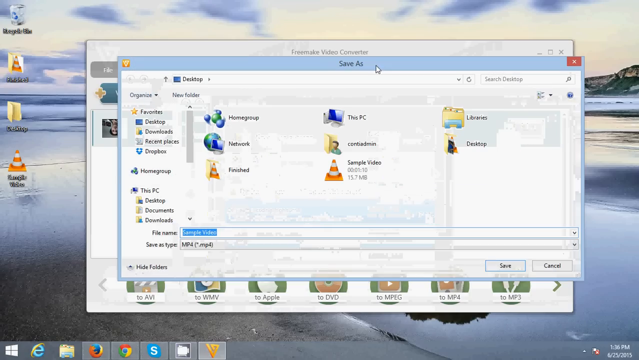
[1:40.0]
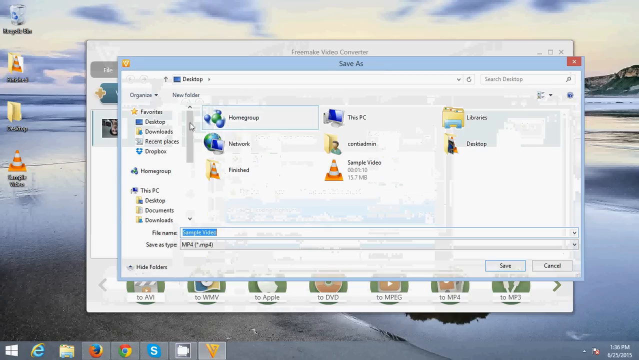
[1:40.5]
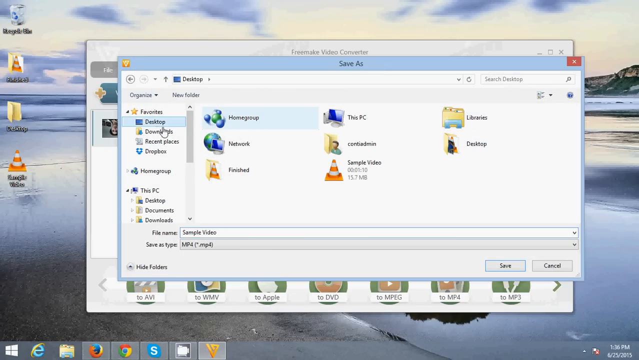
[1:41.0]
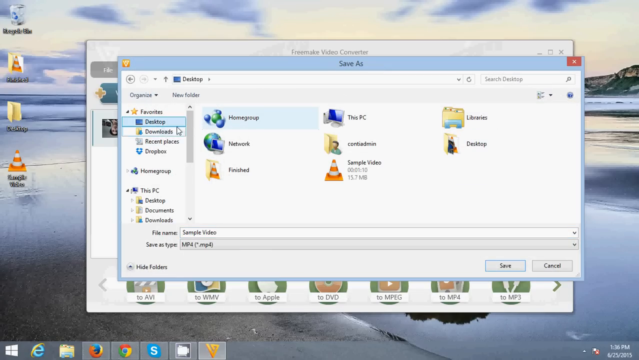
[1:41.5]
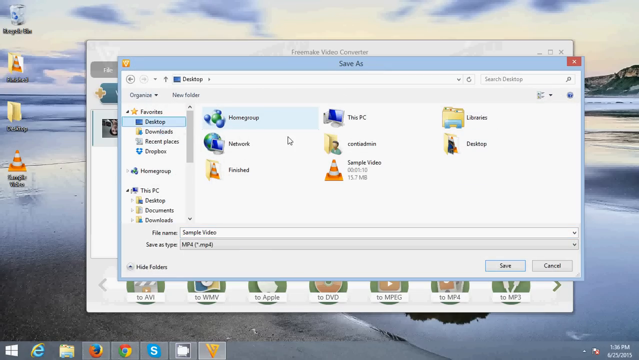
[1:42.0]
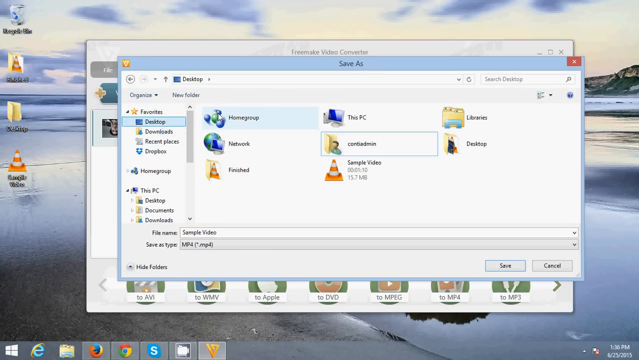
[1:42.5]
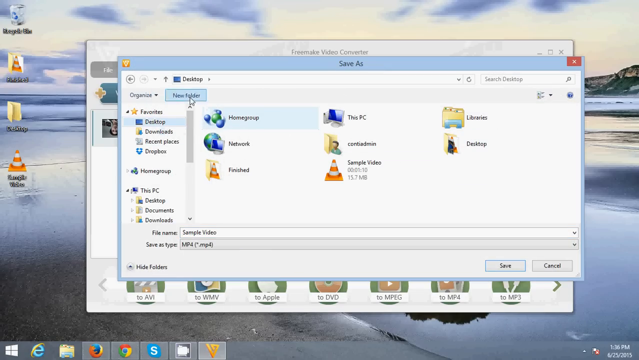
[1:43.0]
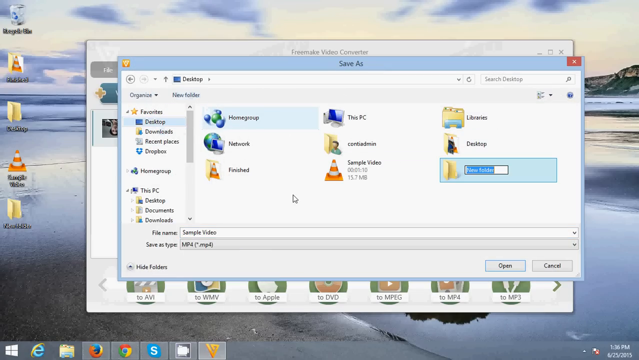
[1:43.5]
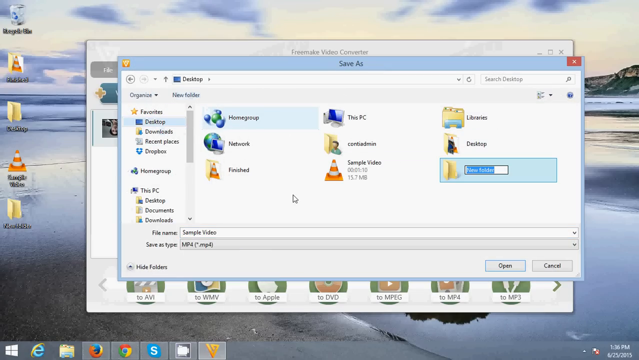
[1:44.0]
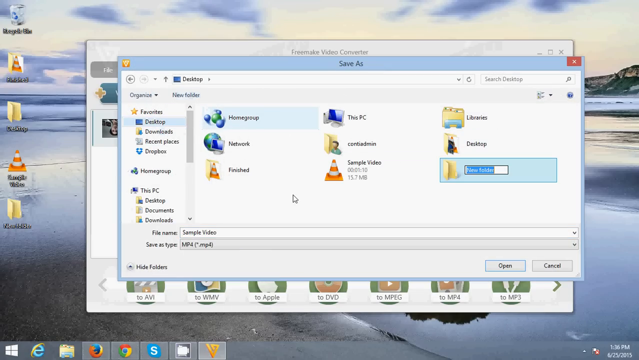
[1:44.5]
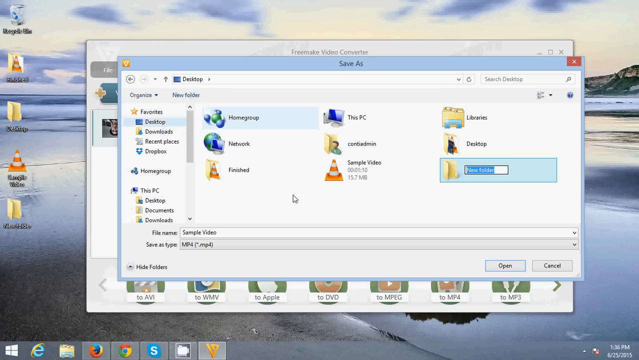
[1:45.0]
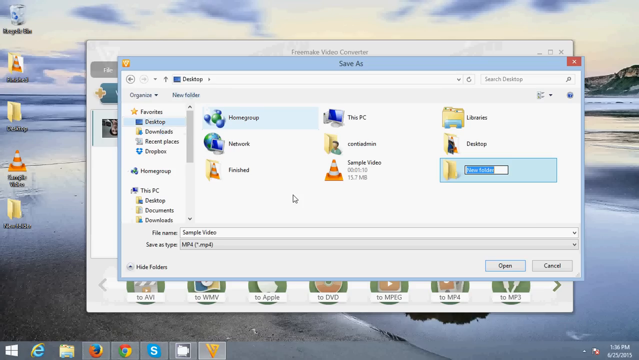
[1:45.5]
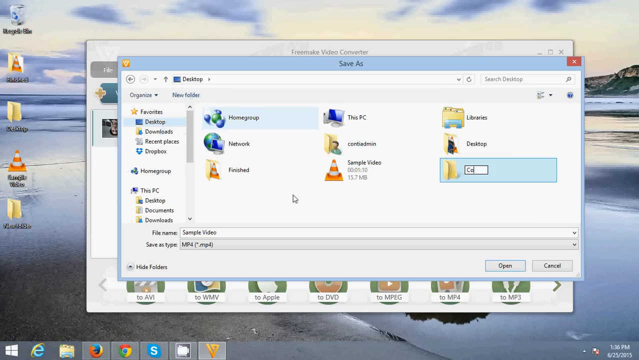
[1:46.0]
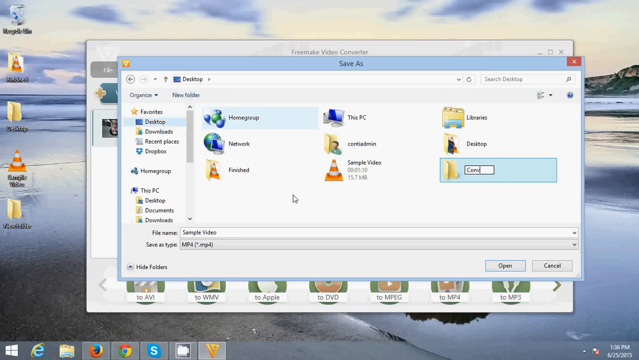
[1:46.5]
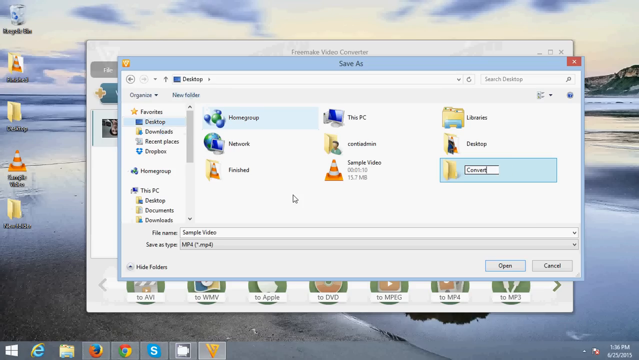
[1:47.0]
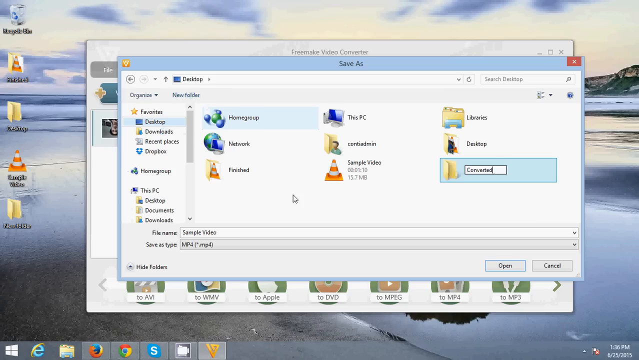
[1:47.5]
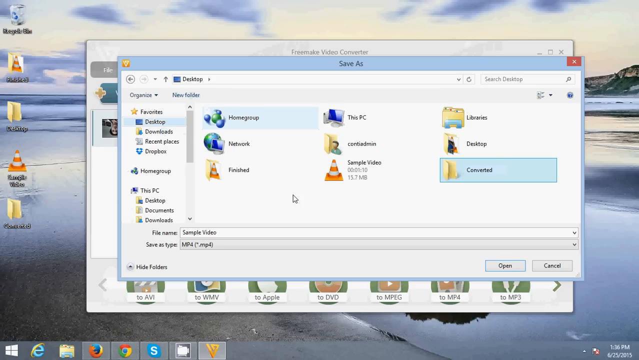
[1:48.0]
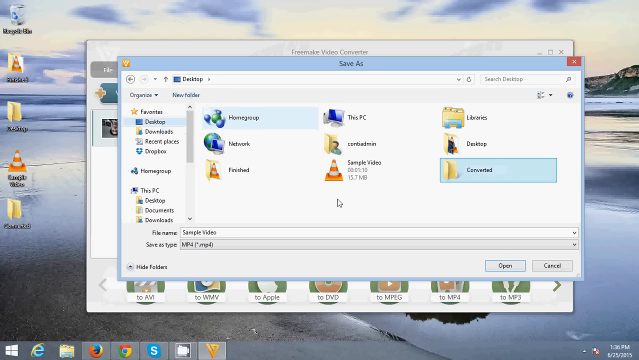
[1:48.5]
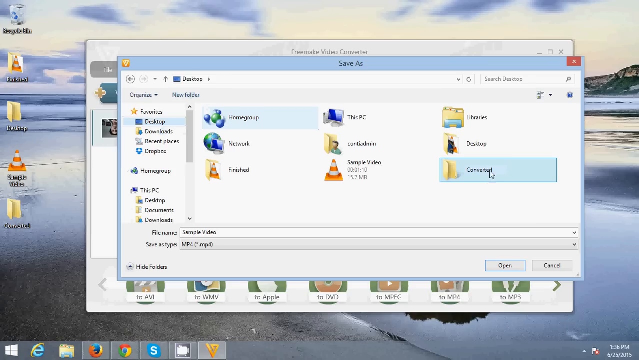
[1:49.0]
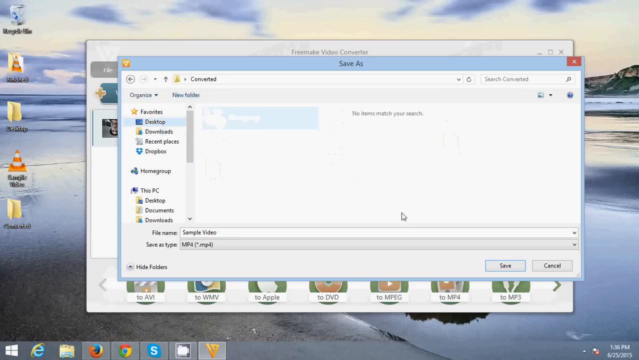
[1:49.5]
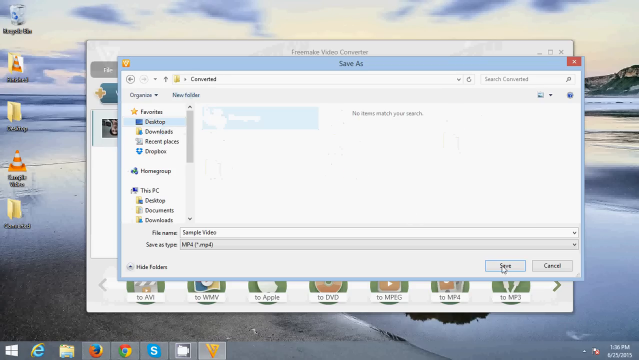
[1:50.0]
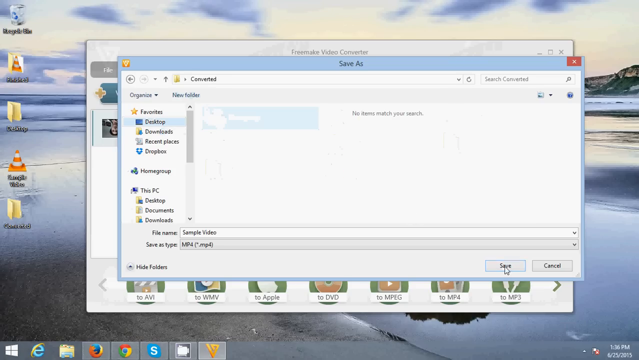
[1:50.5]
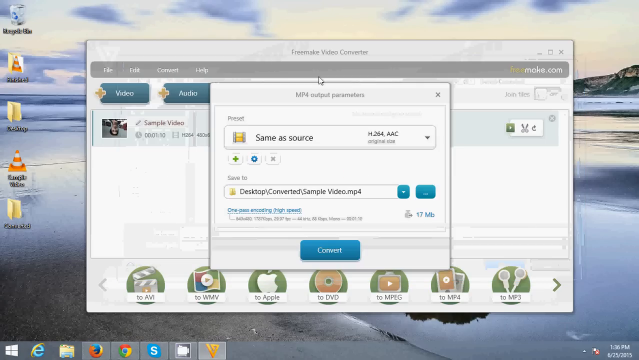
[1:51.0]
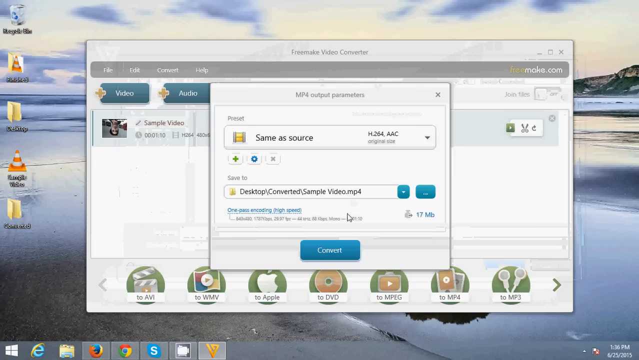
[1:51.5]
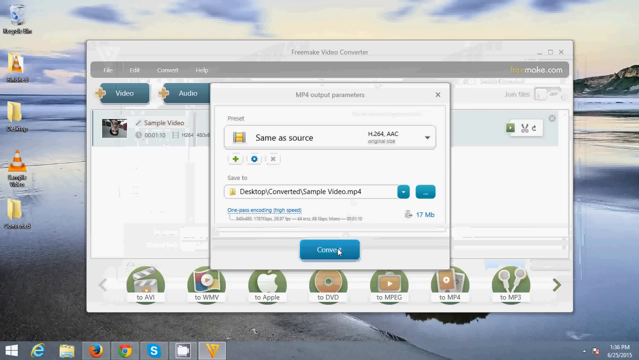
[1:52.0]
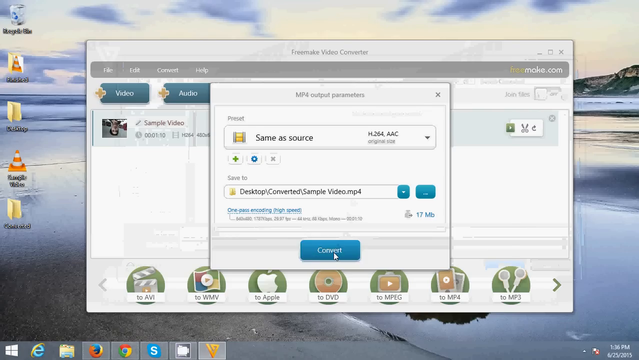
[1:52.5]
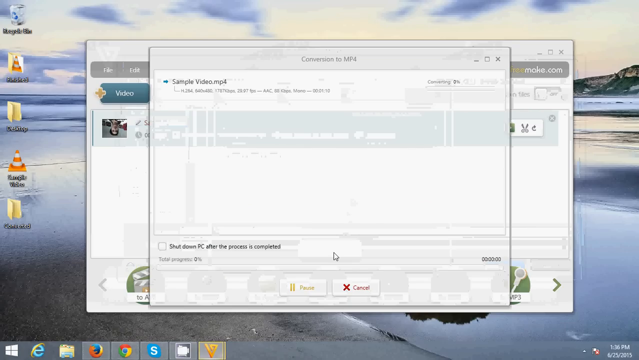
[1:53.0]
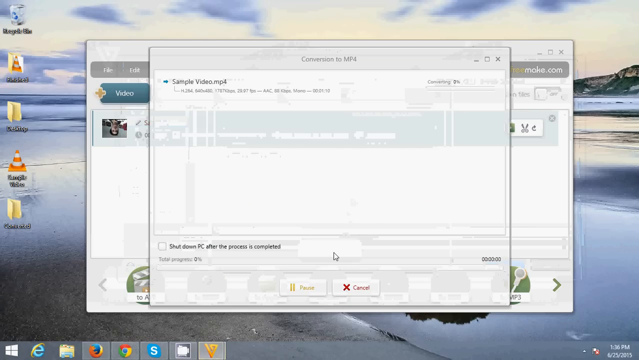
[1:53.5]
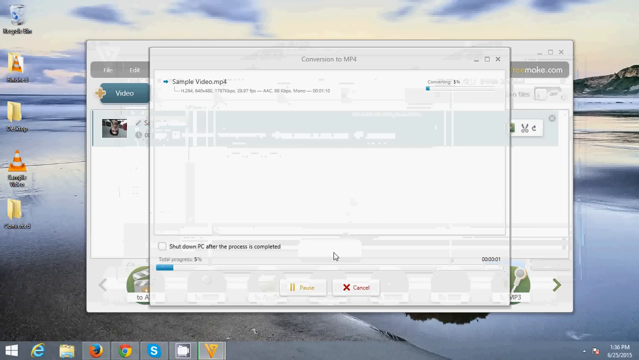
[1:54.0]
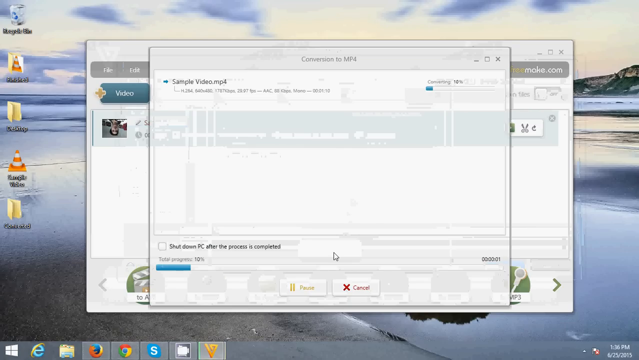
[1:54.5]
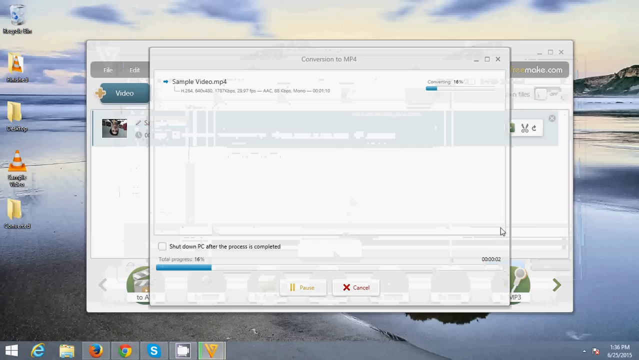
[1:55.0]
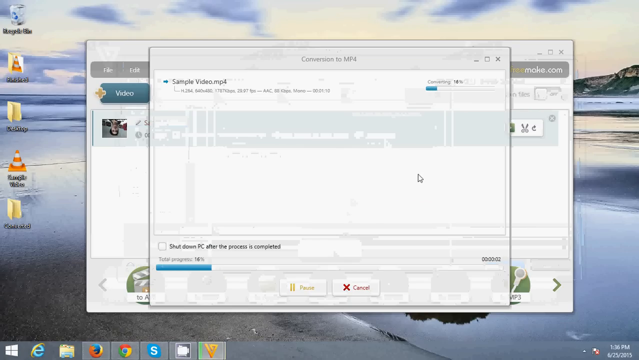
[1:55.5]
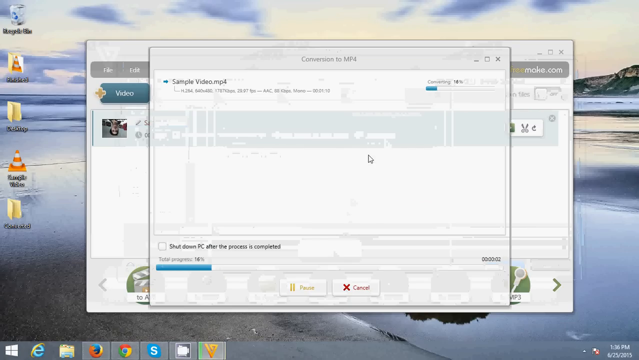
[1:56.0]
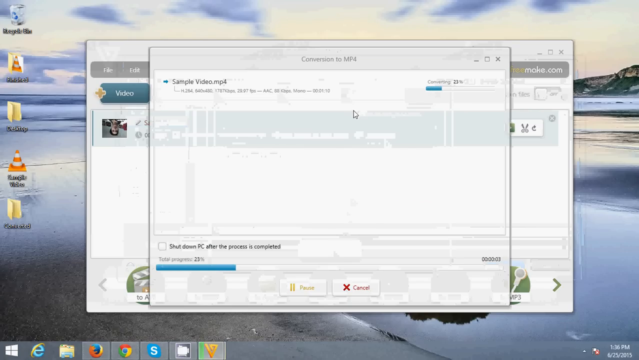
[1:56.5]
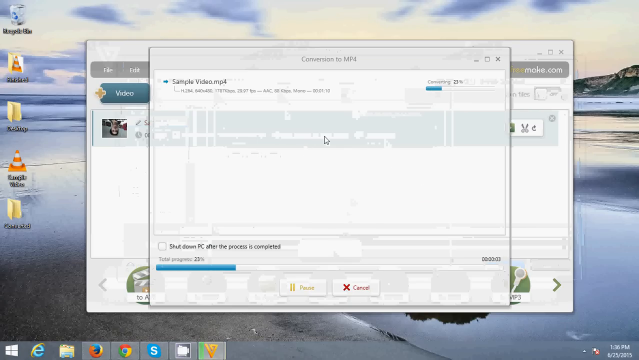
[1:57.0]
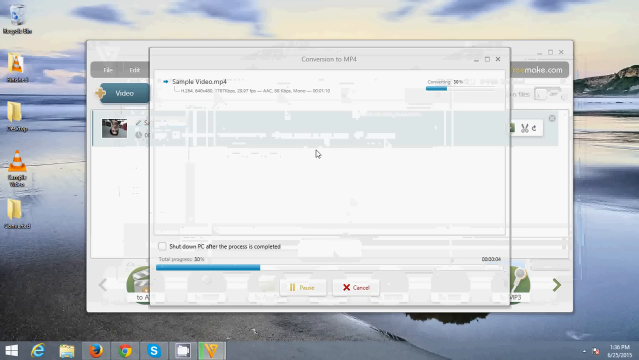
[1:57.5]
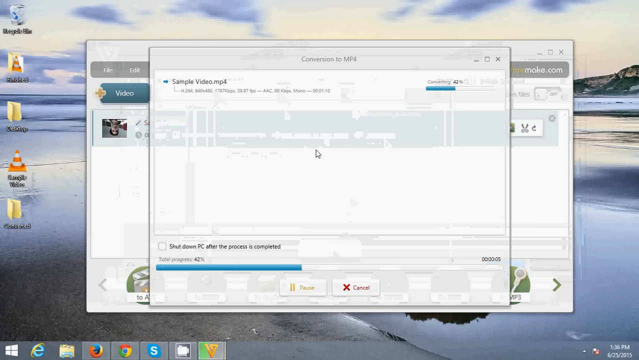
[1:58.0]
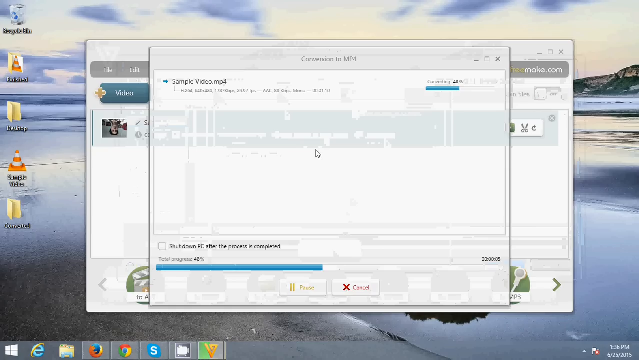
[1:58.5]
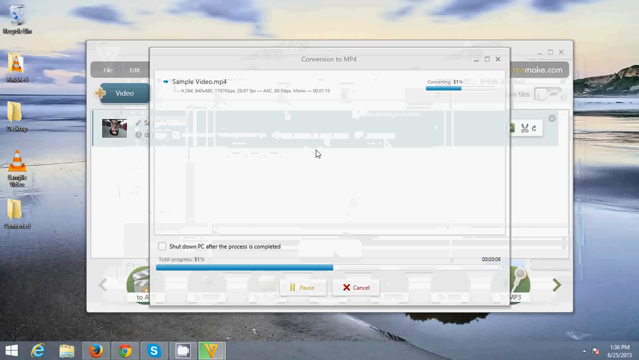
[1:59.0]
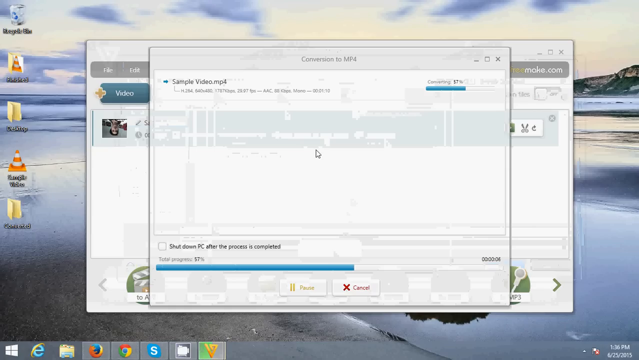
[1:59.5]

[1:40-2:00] In the save window, the white cursor goes to the locations on the side of the save options and clicks Desktop, then creates a new folder on the desktop titled "converted". The folder is opened and the video is saved within it. After Save is clicked, the view returns to the MP4 output parameters box, and the Convert button is clicked. Another box titled "conversion to mp4" appears, with a blue progress bar at the bottom that moves along quite quickly, taking just a couple of seconds to go across, showing the progress of the conversion.